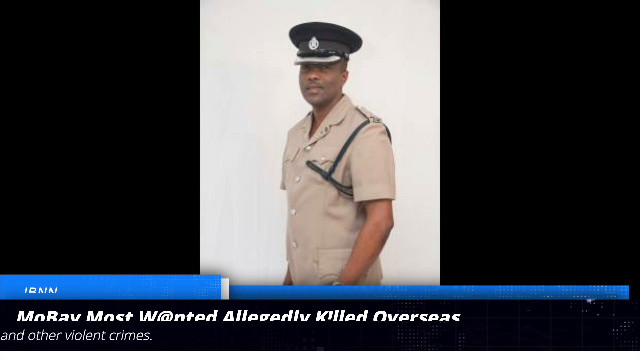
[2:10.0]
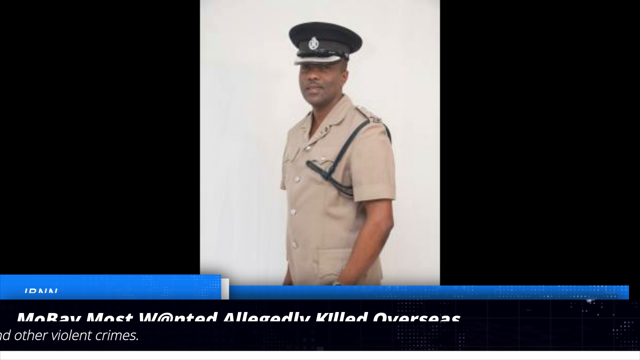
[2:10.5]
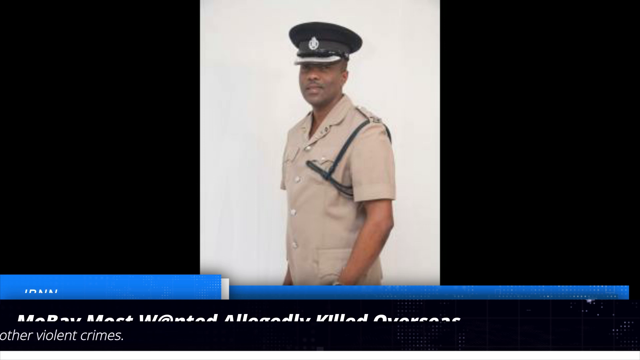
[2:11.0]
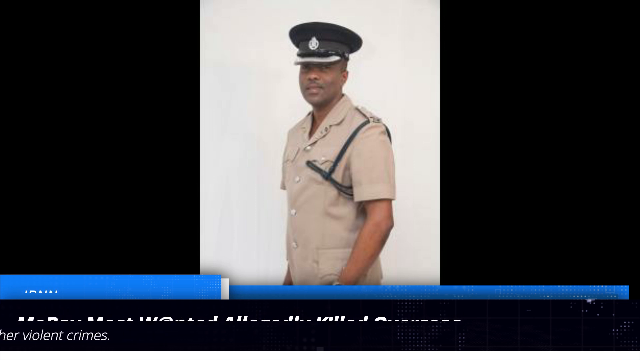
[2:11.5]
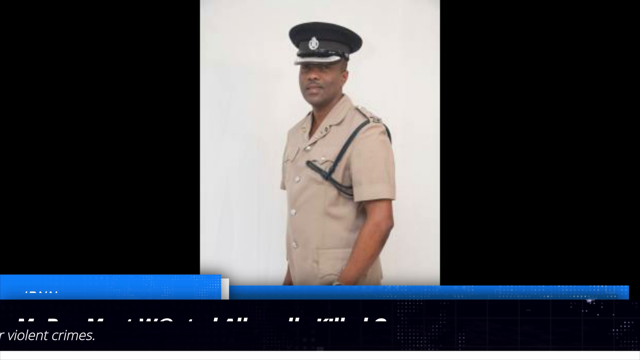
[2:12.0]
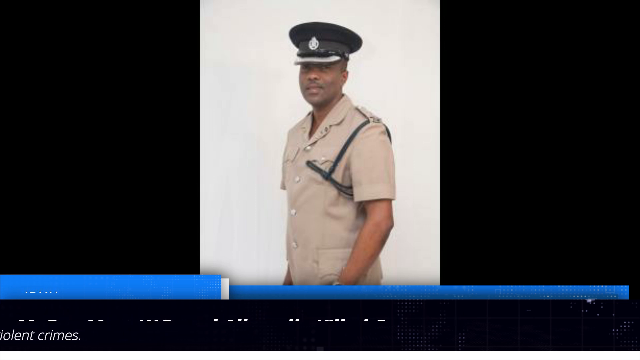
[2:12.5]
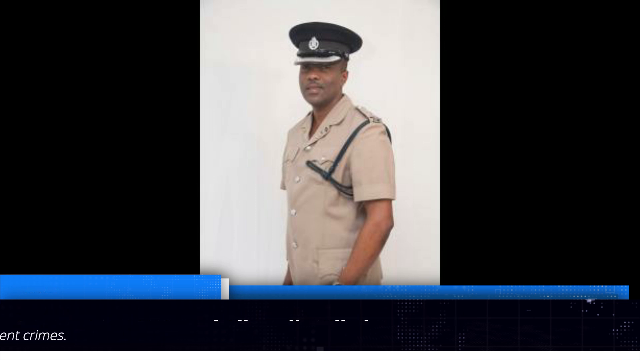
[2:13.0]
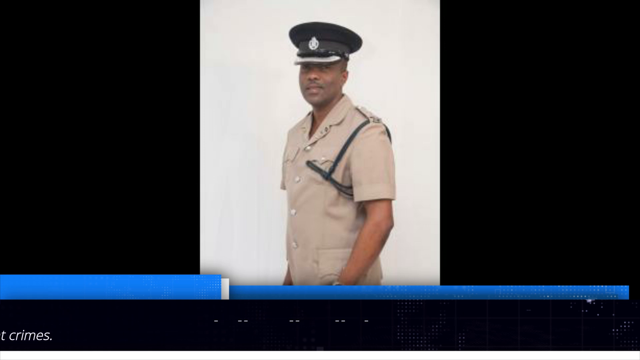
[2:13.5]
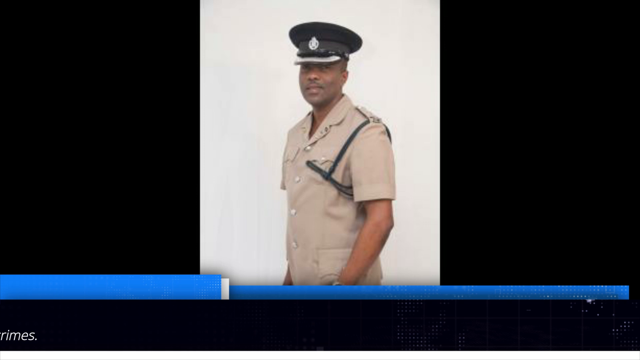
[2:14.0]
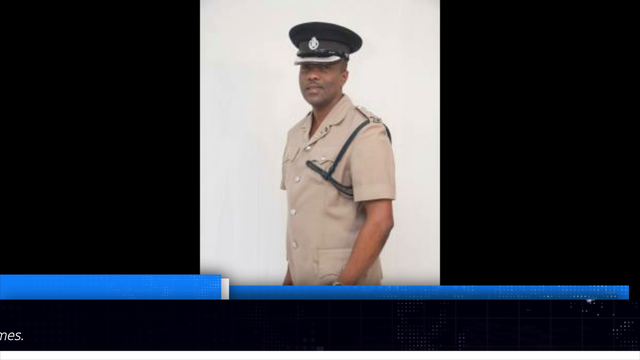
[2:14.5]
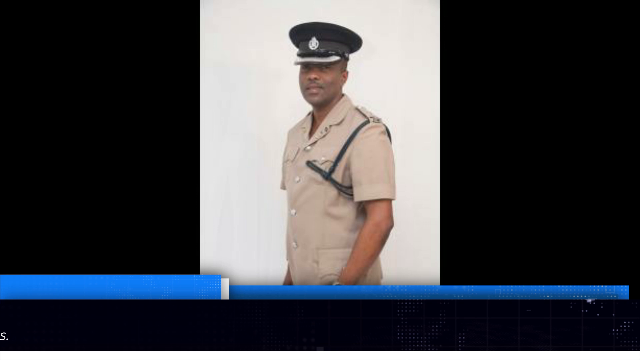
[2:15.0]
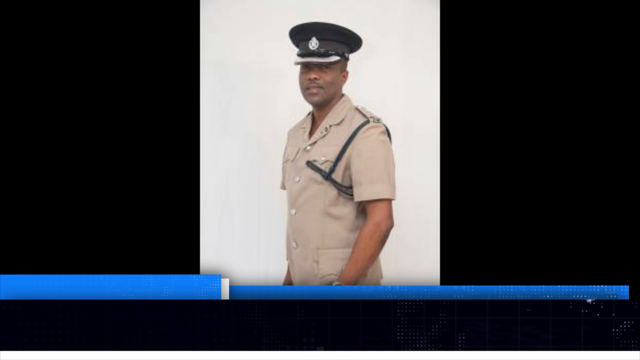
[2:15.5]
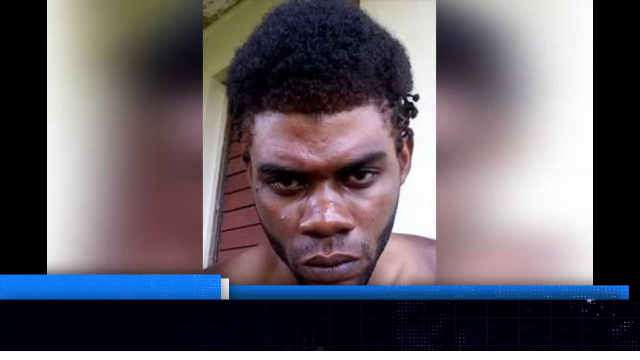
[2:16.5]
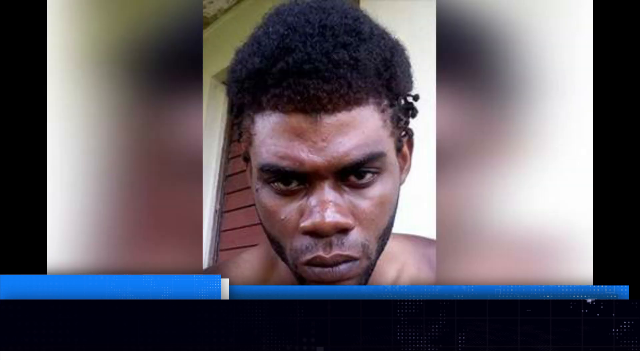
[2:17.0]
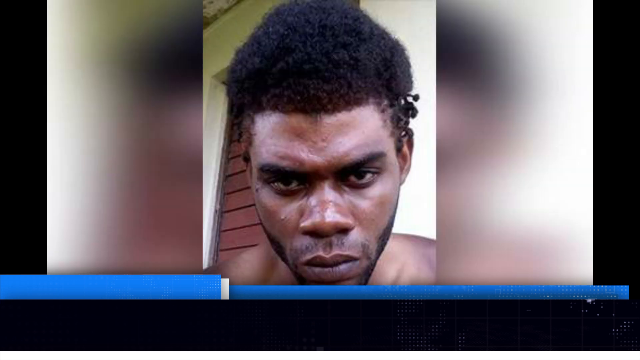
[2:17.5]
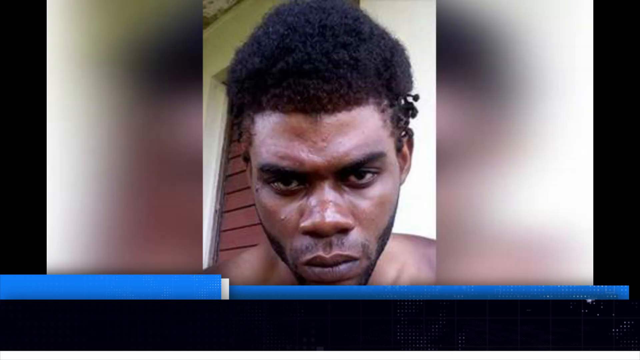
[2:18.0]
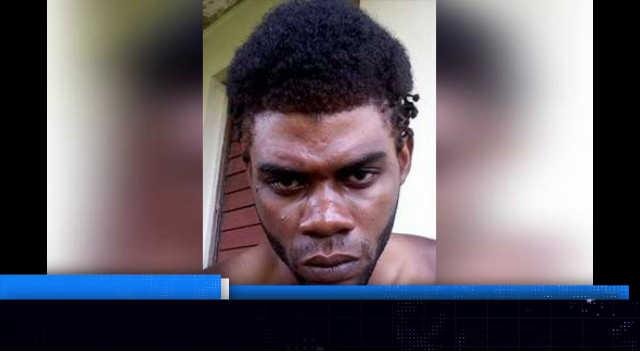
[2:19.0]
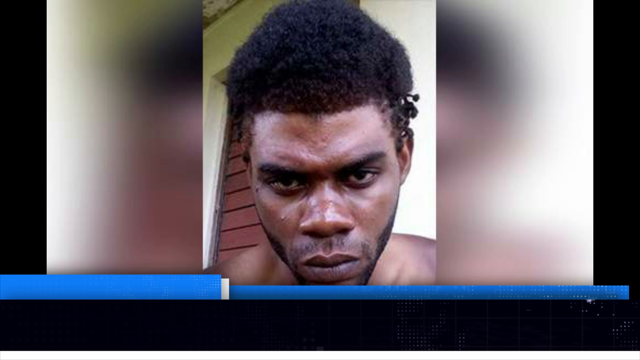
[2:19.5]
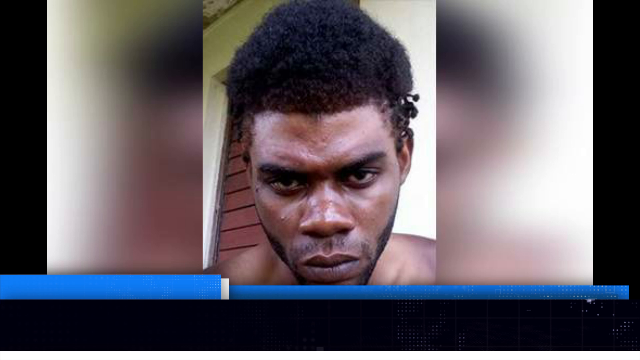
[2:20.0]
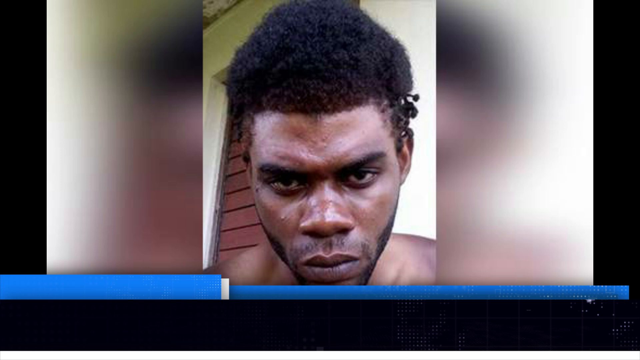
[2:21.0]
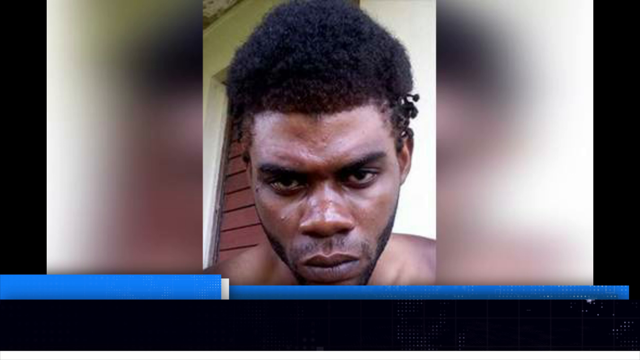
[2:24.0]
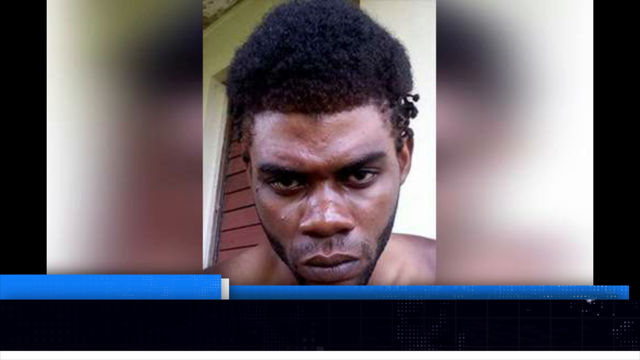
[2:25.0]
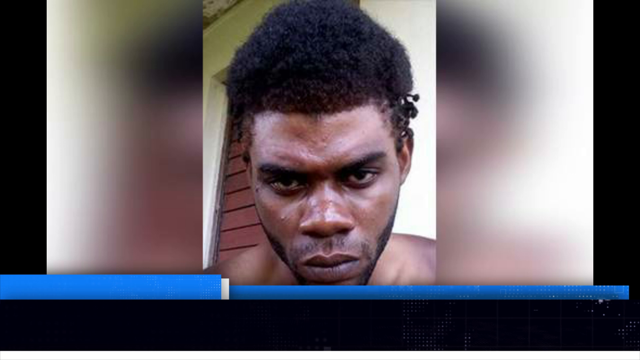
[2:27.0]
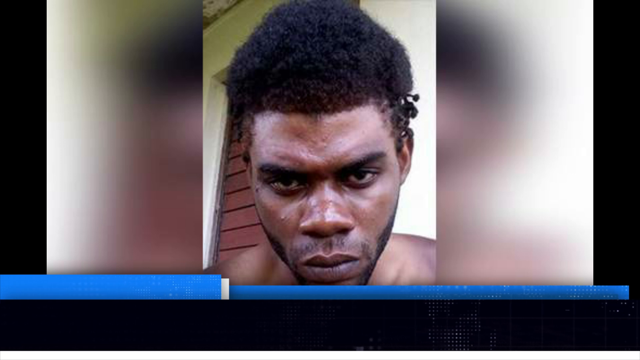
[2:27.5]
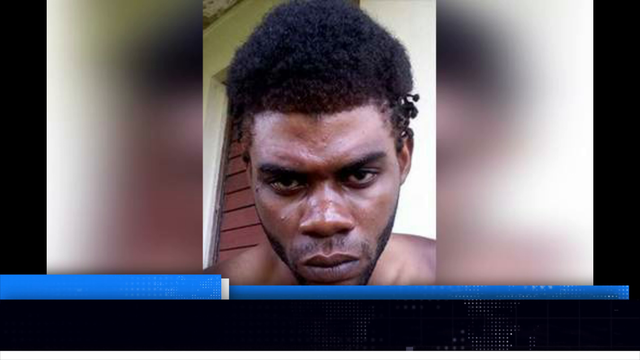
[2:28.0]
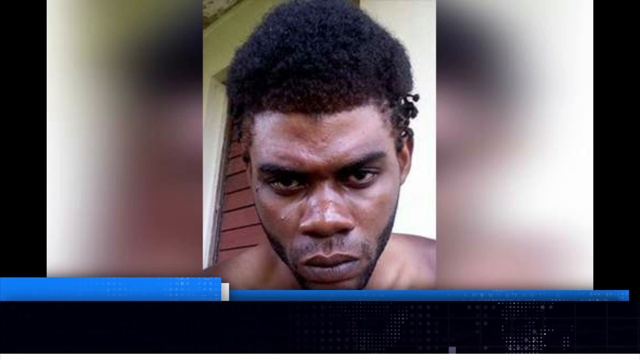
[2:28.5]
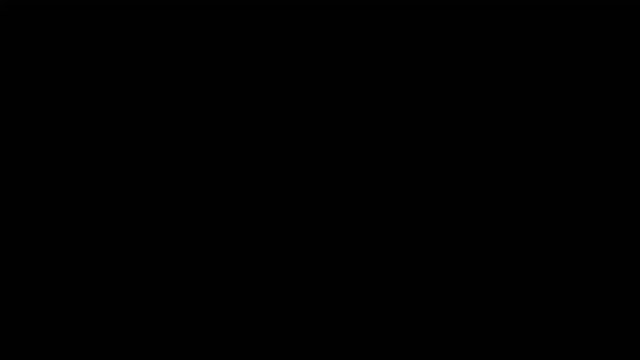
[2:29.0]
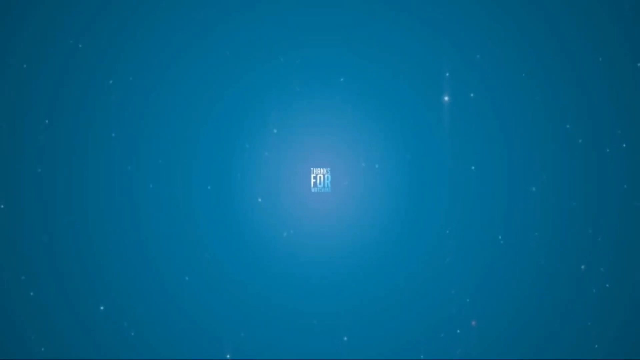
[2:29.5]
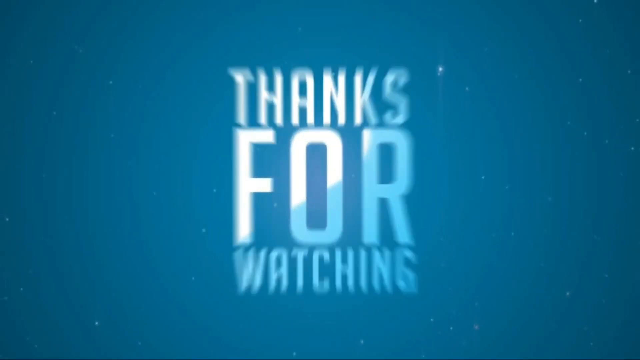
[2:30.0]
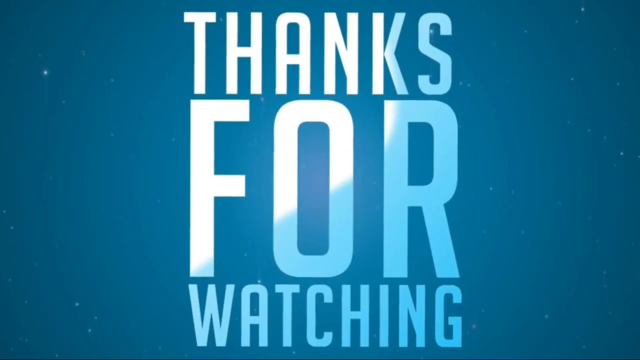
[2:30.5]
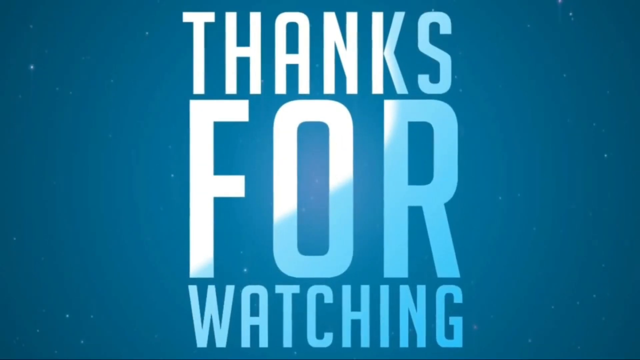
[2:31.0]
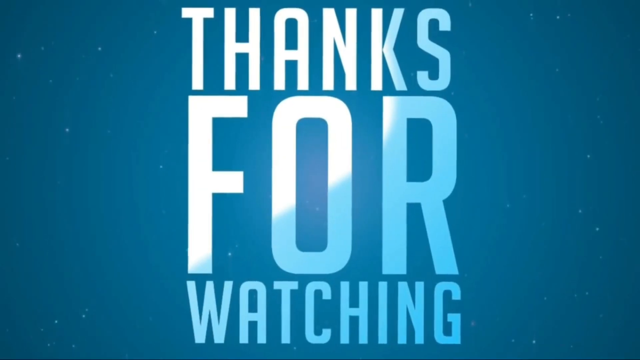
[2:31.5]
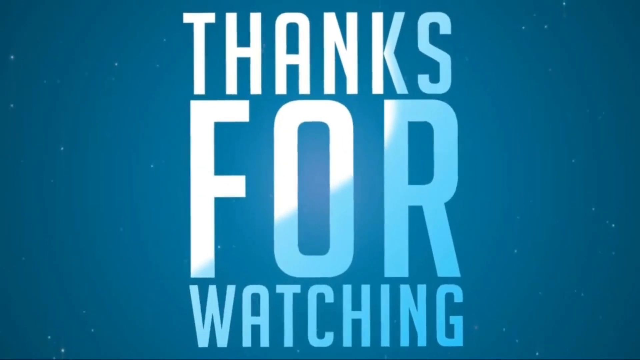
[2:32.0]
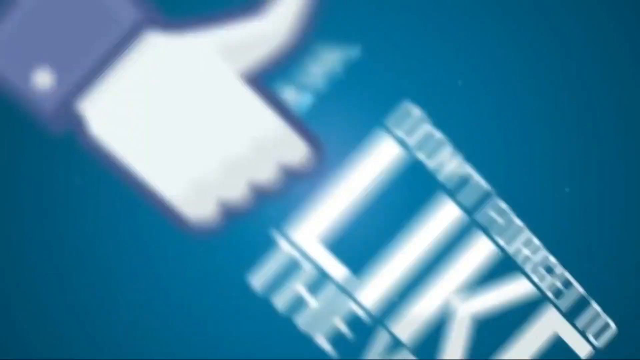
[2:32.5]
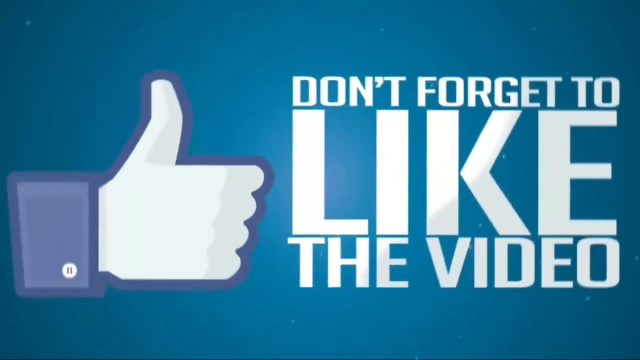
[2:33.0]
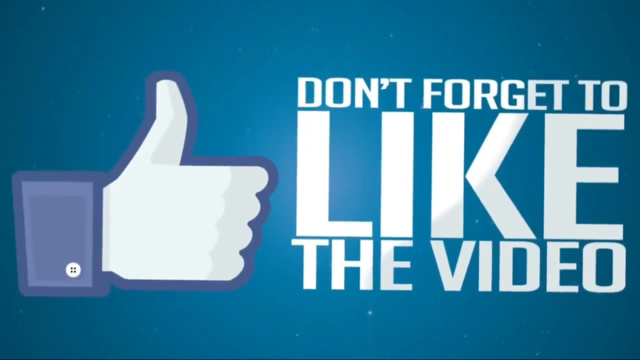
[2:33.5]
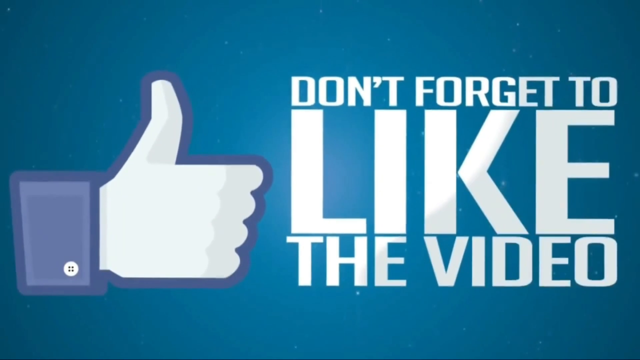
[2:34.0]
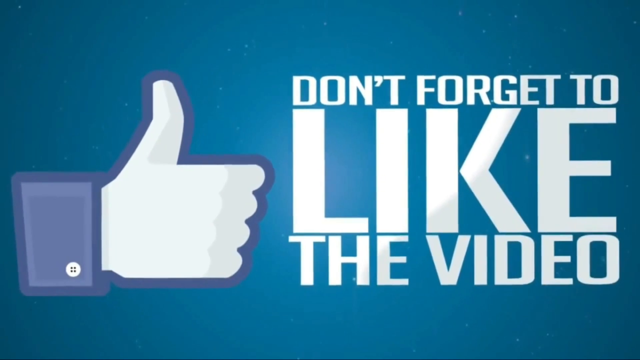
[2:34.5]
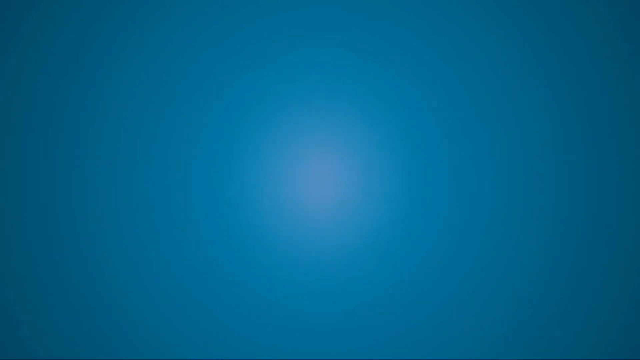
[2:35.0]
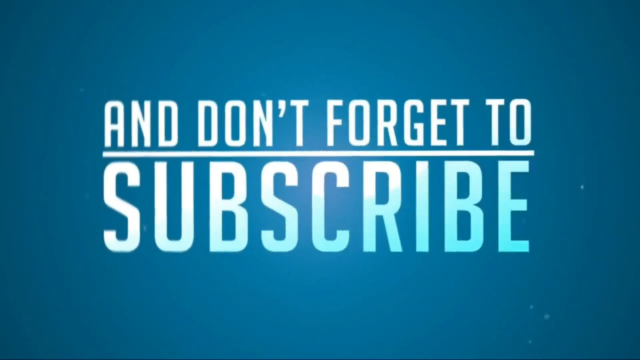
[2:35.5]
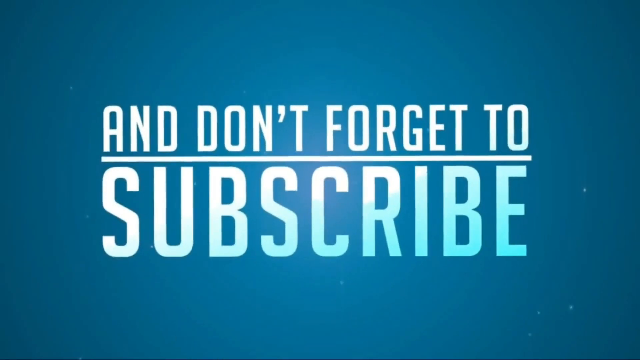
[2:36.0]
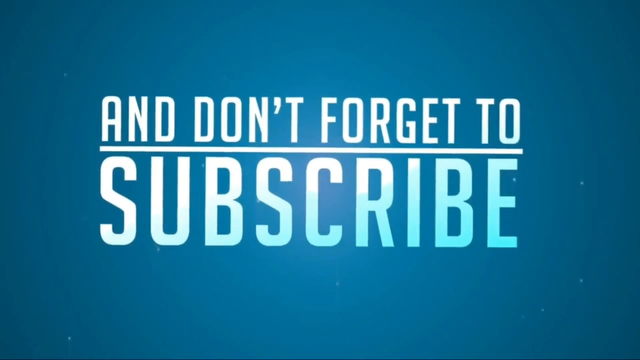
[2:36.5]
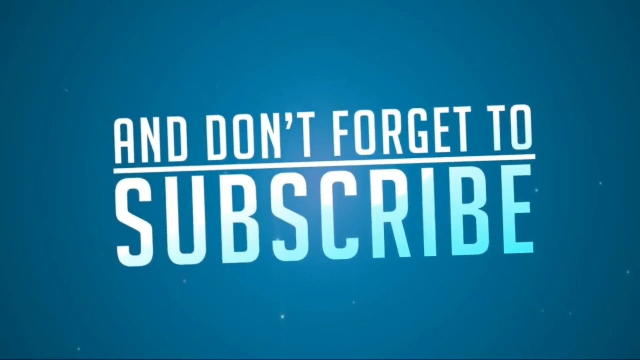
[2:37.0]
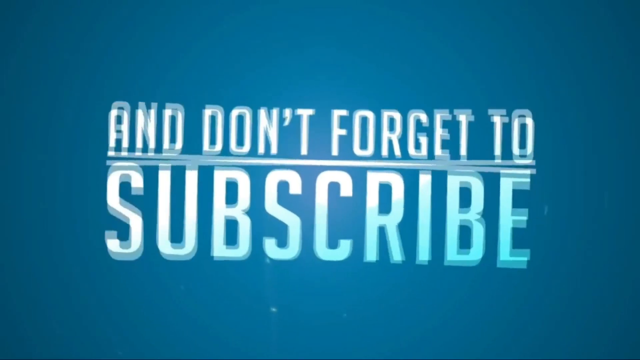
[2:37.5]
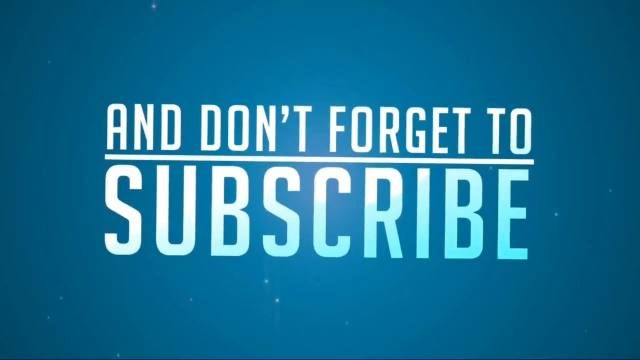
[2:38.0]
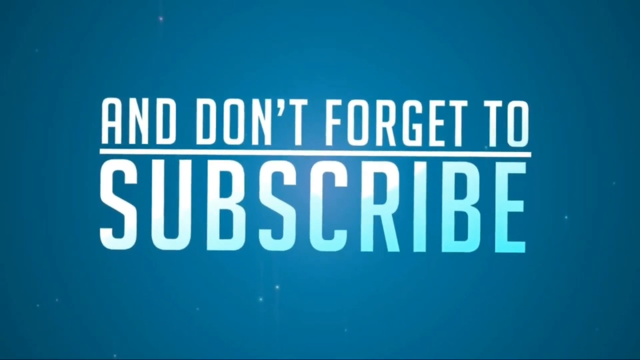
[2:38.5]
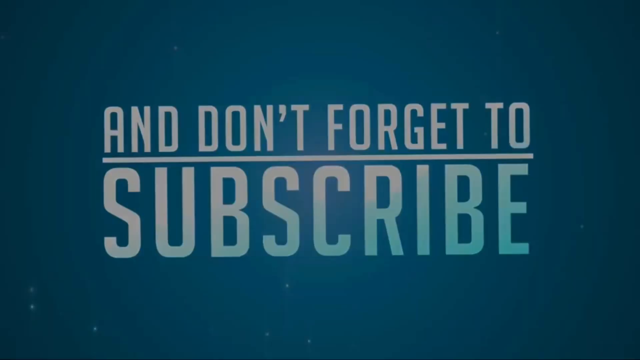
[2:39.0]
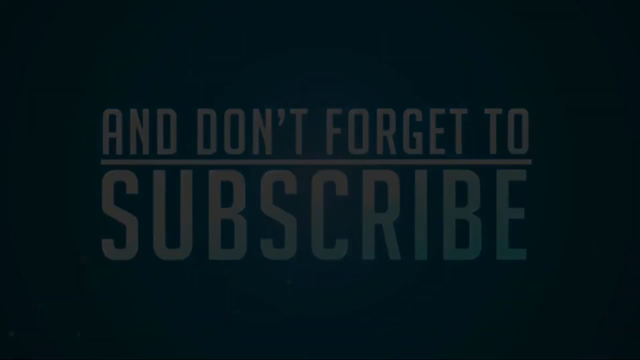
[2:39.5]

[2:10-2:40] Heavy letterboxing on the left and right, probably around two-thirds of the frame divided evenly, frames a static image in the center of a middle-aged man. His body faces somewhere around seven, but his head is turned to the left, and he faces the camera with a neutral expression. He wears a military outfit with a black hat and a short-sleeved tan shirt with gold buttons down the center. His arms are at his sides, and the background is off-white. Next comes another static image of another black man looking straight at the camera with a very angry expression. His hair is slightly curly but not noticeably long. Behind him is what looks like window blinds and an off-white wall. Finally, an aquamarine background appears and text comes into the center reading "thanks for watching".